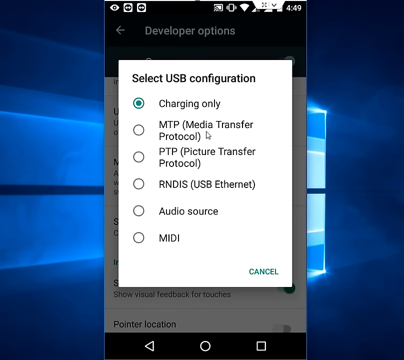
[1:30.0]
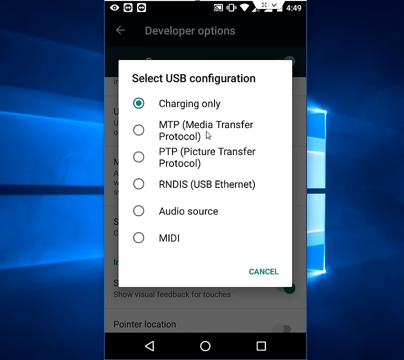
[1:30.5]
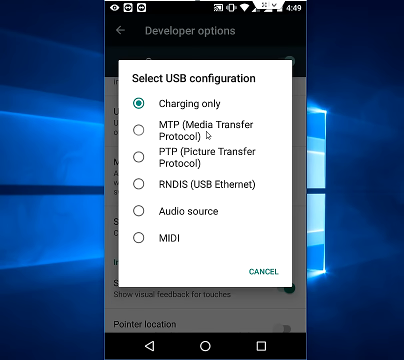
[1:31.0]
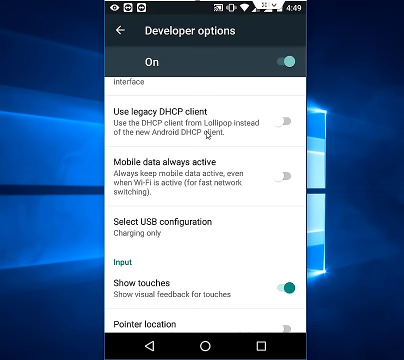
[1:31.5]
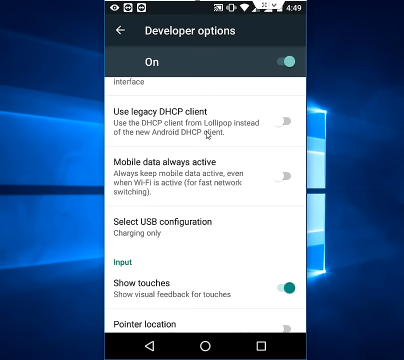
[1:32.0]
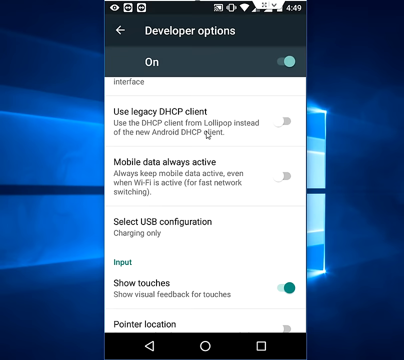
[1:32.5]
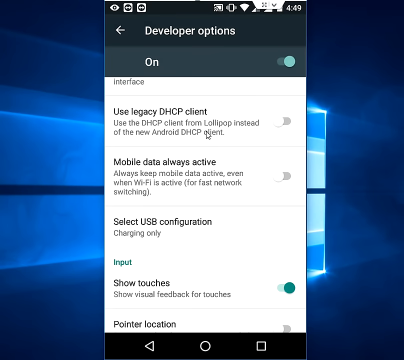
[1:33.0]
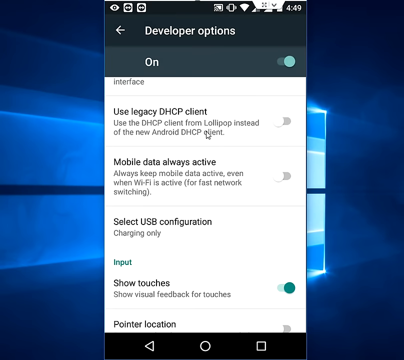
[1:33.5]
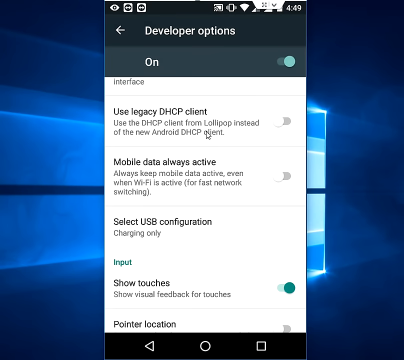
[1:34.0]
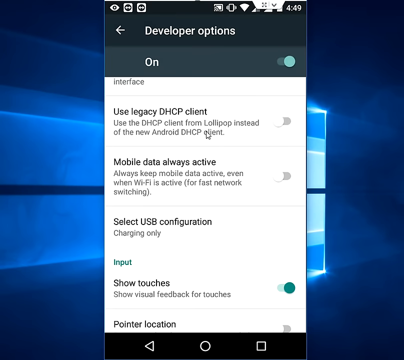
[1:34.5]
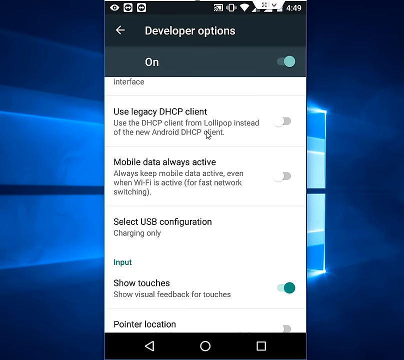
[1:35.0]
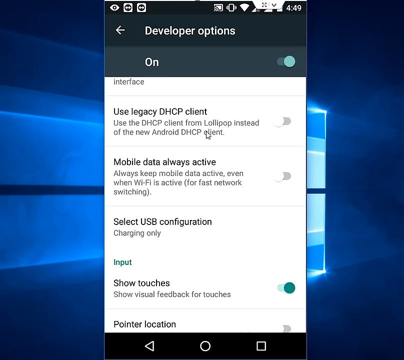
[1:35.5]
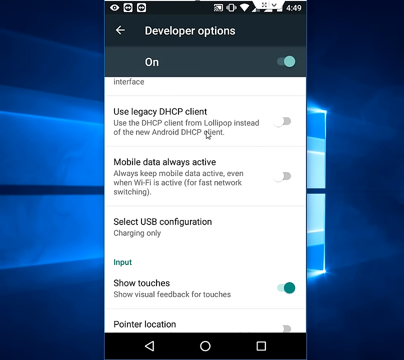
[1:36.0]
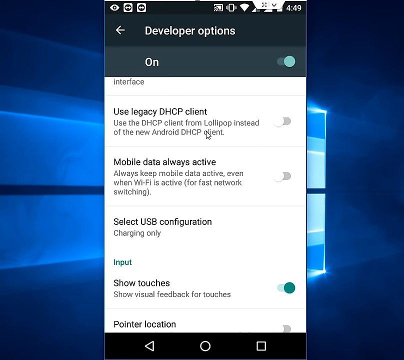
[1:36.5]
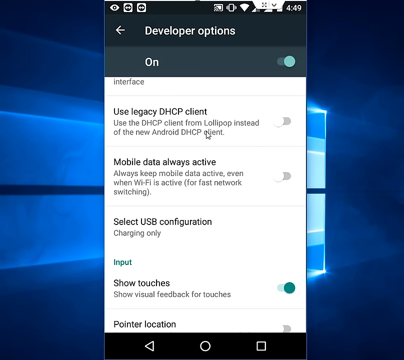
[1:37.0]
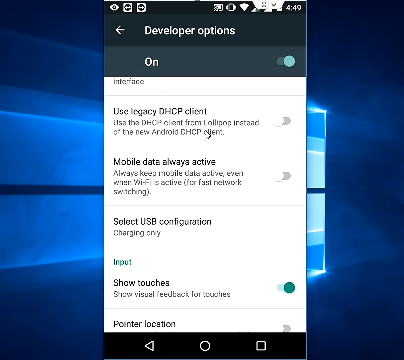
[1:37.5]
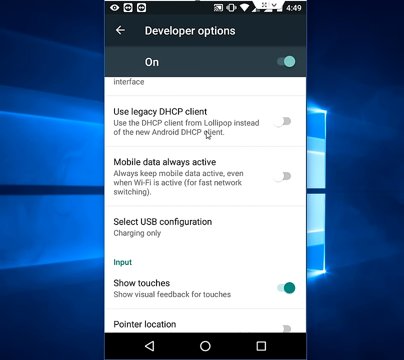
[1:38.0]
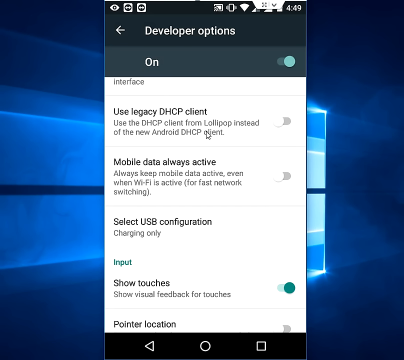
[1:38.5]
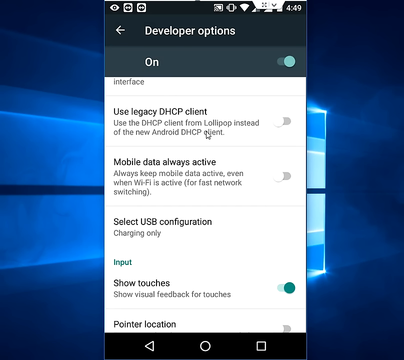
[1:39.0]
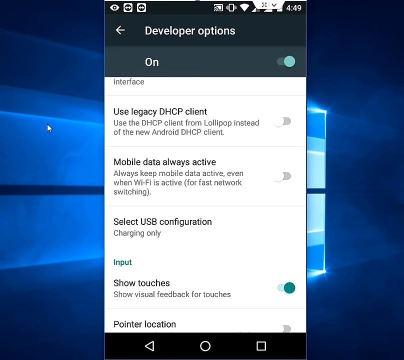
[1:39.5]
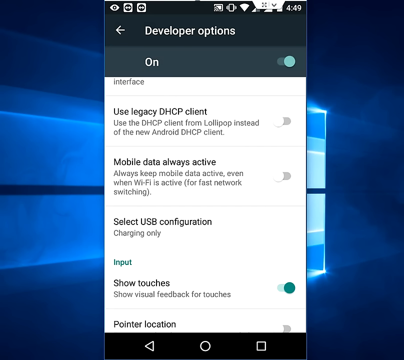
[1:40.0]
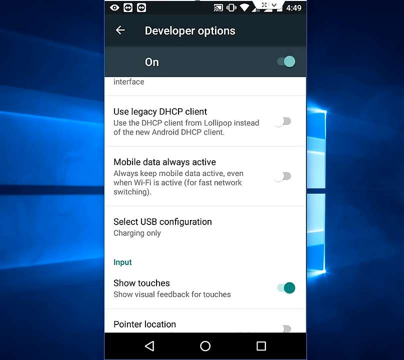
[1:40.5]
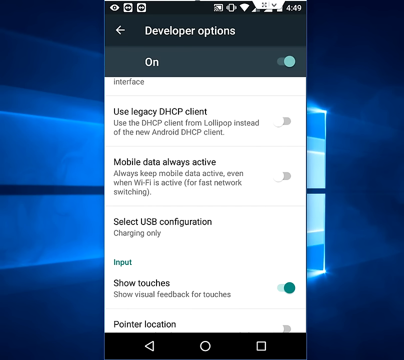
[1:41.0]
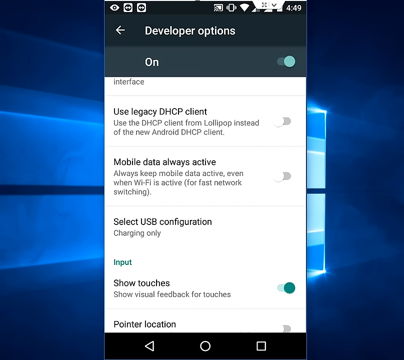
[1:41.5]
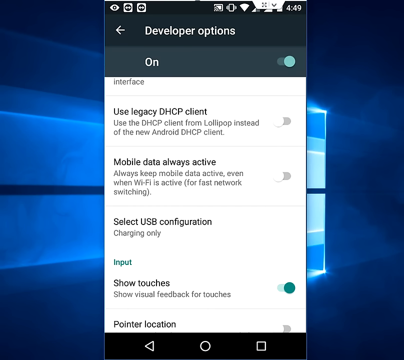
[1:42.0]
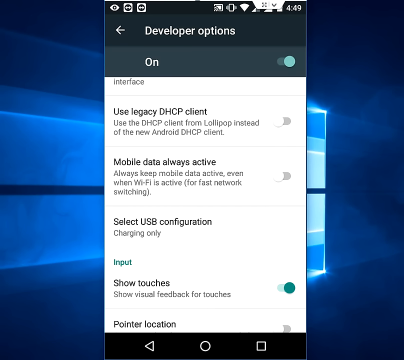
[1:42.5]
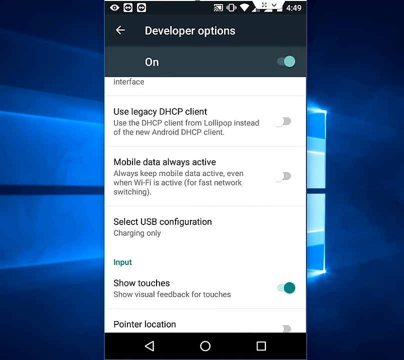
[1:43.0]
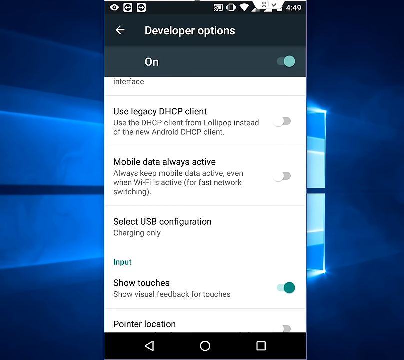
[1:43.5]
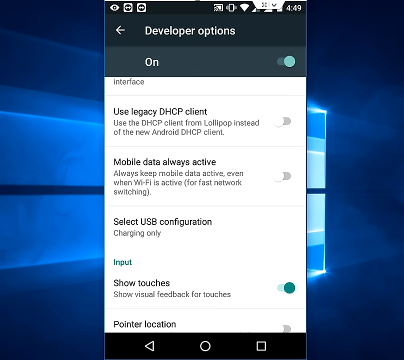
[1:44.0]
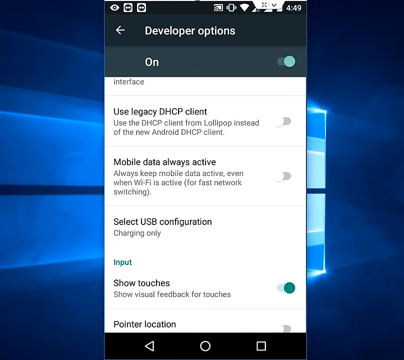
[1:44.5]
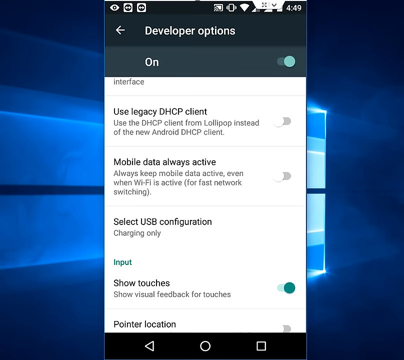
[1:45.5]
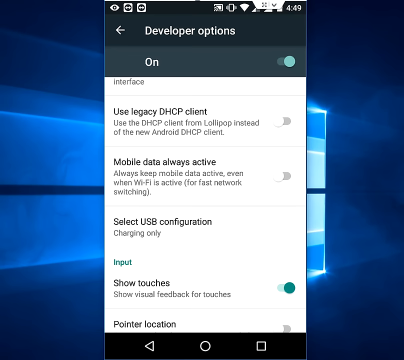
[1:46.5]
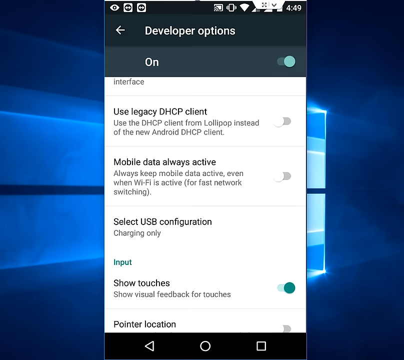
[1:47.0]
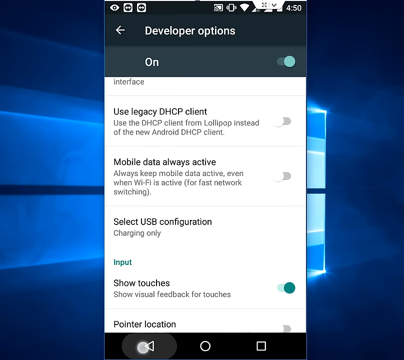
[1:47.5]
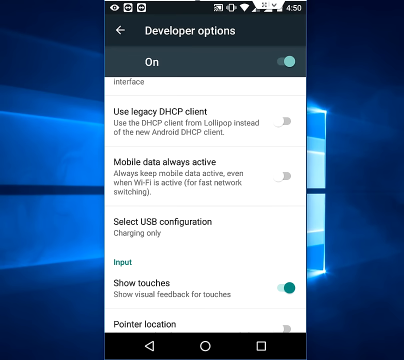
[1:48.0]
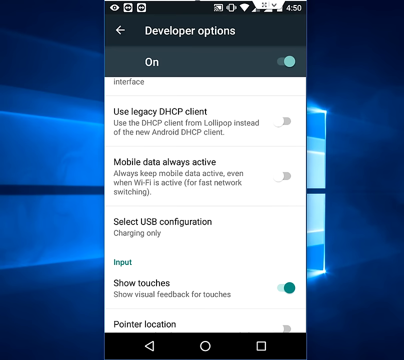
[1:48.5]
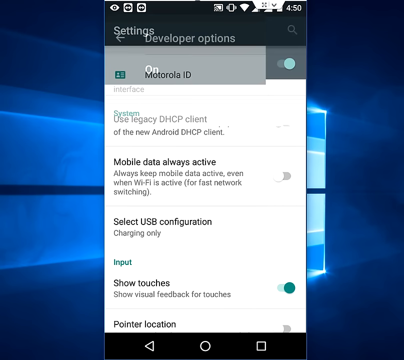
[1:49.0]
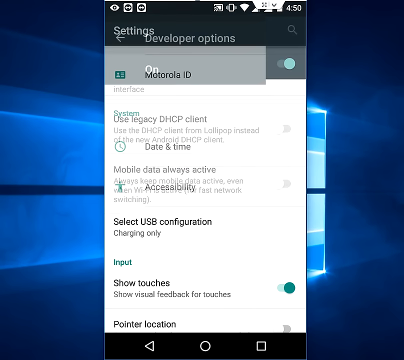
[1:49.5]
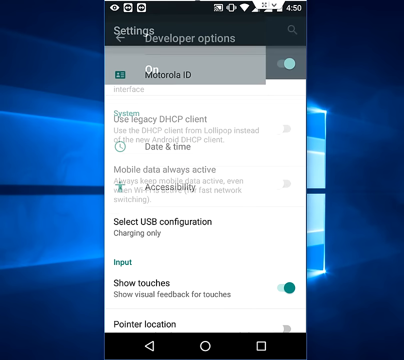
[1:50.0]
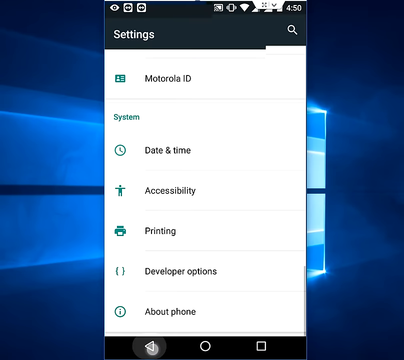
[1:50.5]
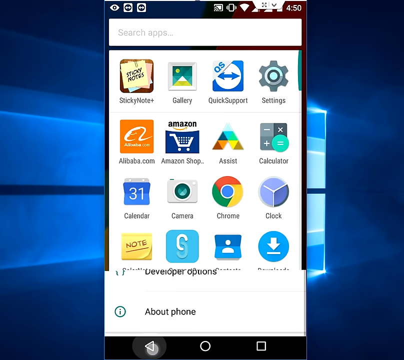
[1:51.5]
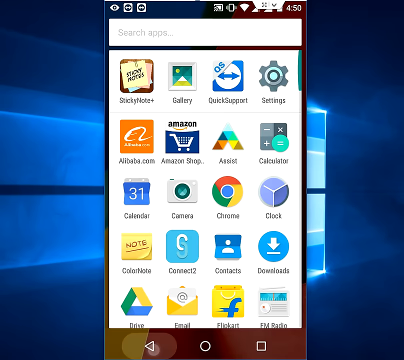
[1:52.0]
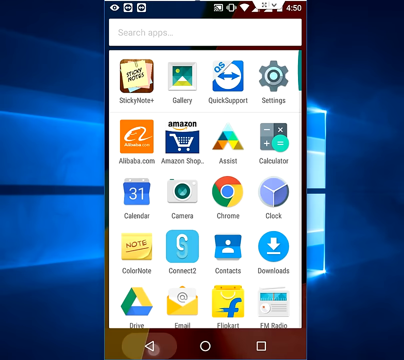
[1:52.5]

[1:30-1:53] A cell phone's face is displayed as a user goes through different settings and selects functions. Use legacy DHCP client and mobile data always active are both grayed out and not selected. The user then moves to another area showing more setting options, such as Motorola ID, and then to the system functions: date and time, accessibility, printing, developer options, and a section called about phone. The view then moves back to the screen showing the icons of the apps on the phone, including Sticky Notes, Gallery, Quick Support, Settings, Alibaba.com, Amazon Shop, Assist, Calculator, Calendar, Camera, Chrome, Clock, Color Note, Connect To, Contacts, Downloads, Drive, Email, Flickr and FM Radio.